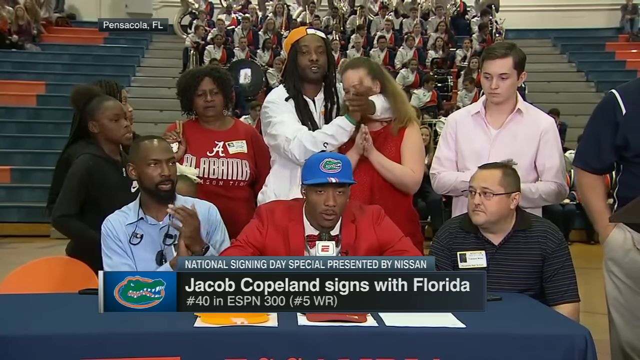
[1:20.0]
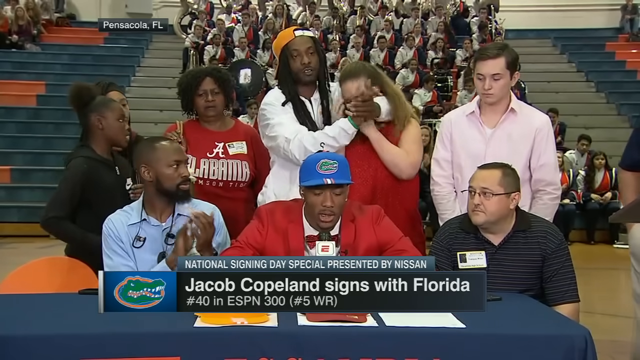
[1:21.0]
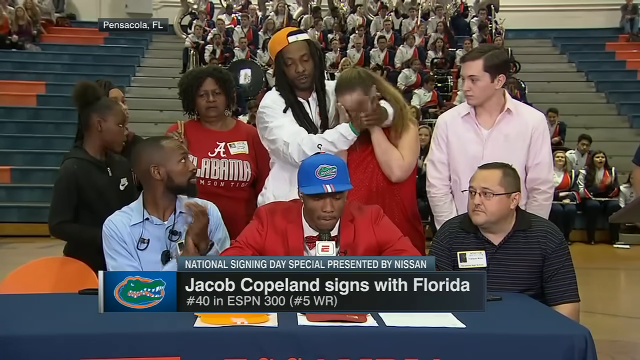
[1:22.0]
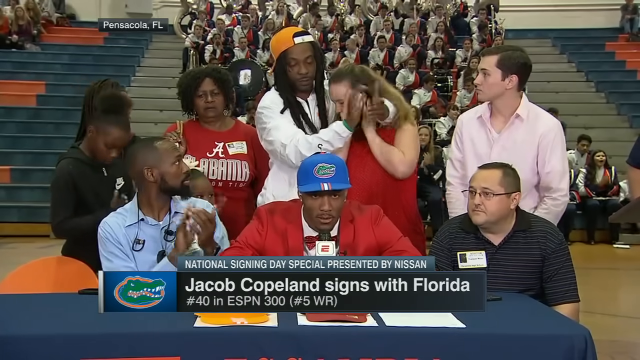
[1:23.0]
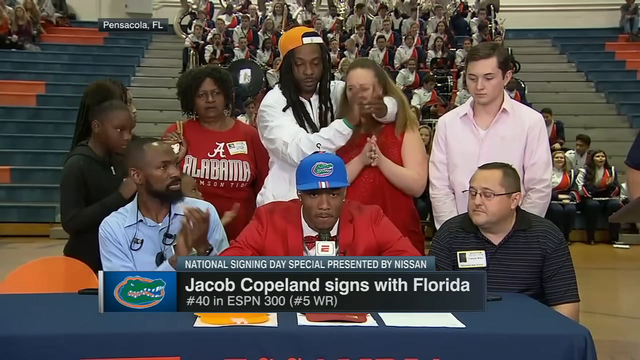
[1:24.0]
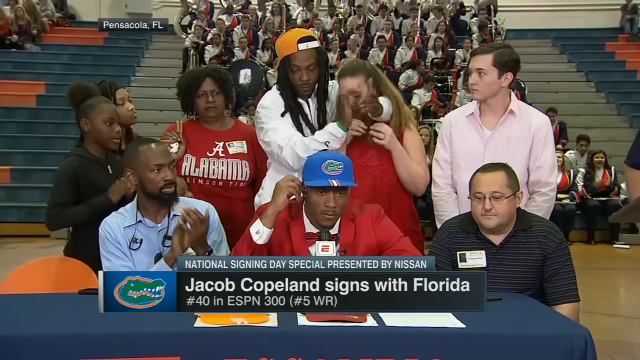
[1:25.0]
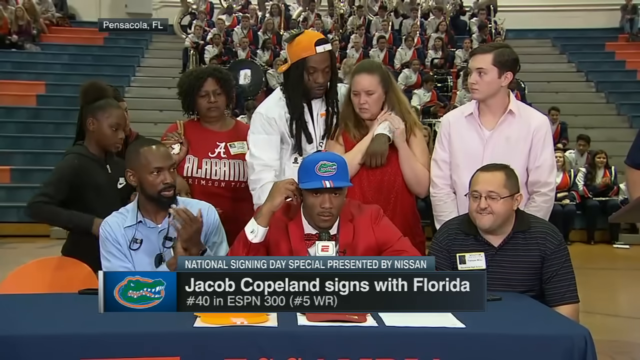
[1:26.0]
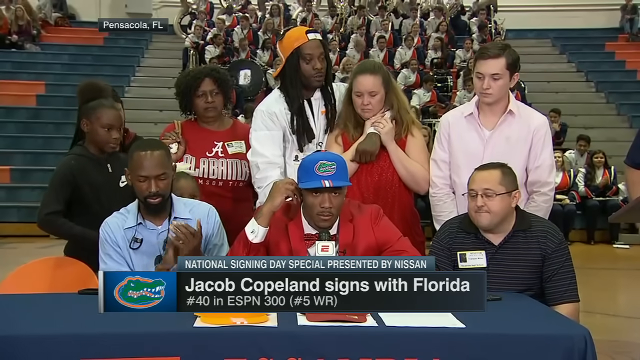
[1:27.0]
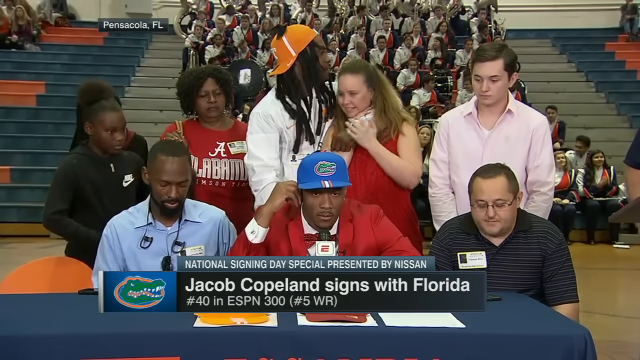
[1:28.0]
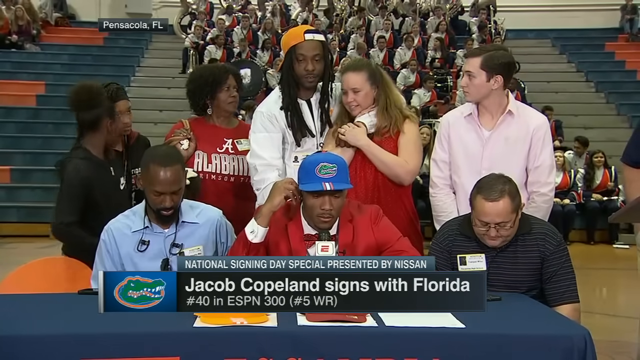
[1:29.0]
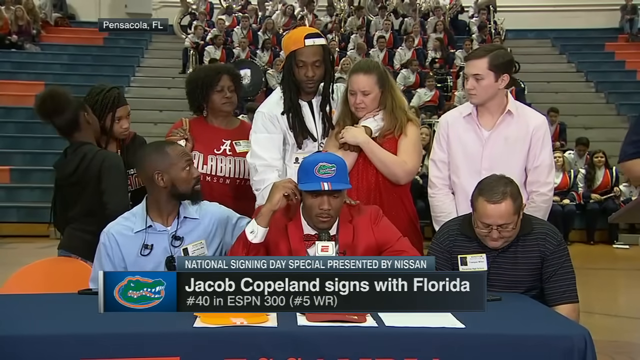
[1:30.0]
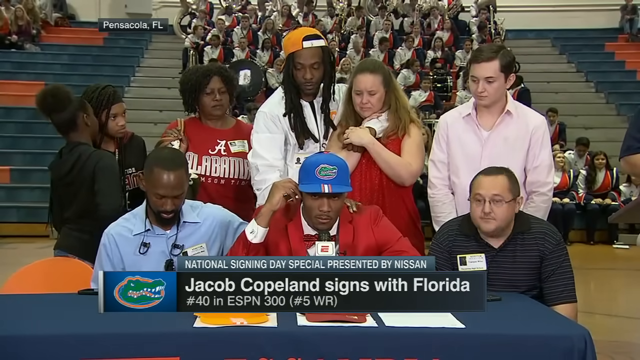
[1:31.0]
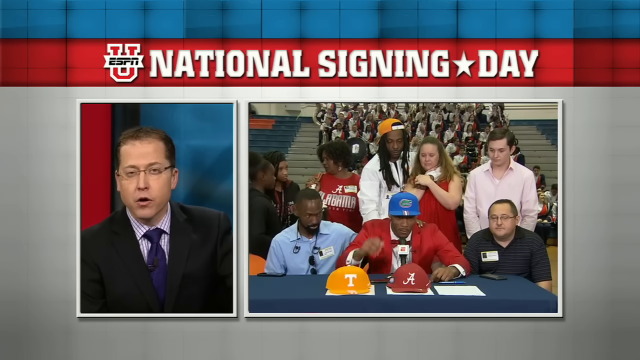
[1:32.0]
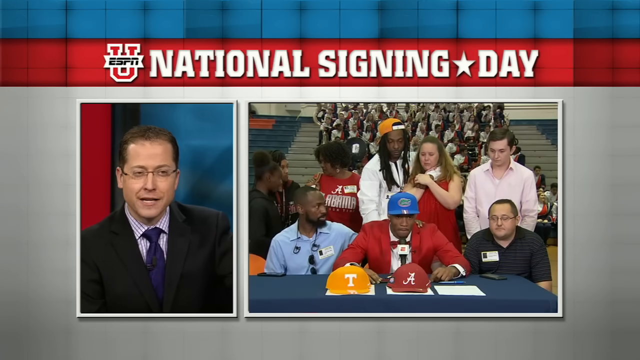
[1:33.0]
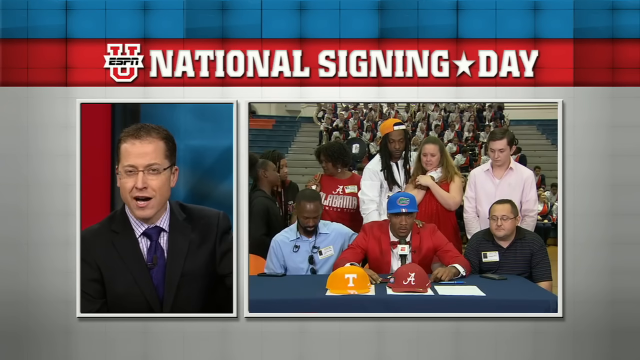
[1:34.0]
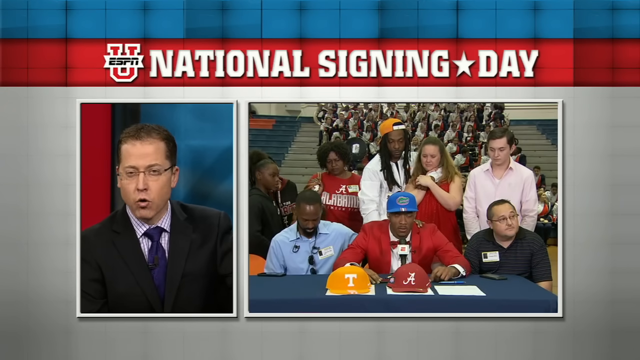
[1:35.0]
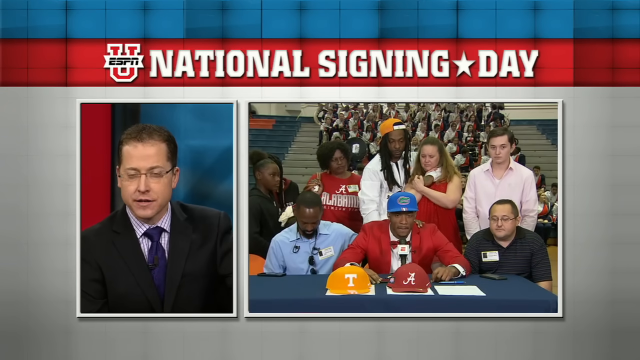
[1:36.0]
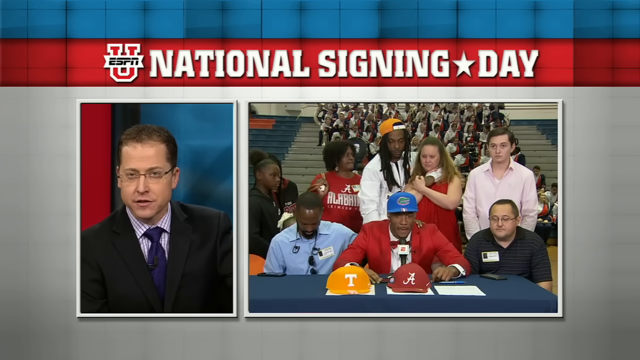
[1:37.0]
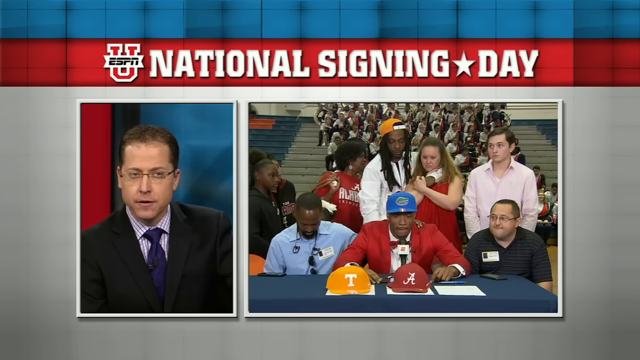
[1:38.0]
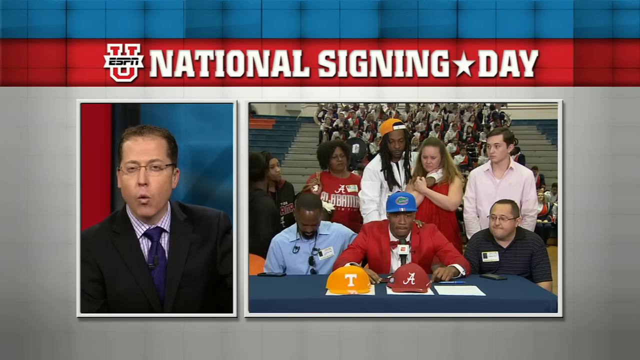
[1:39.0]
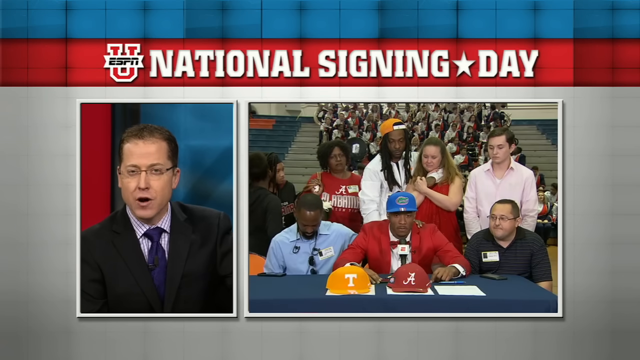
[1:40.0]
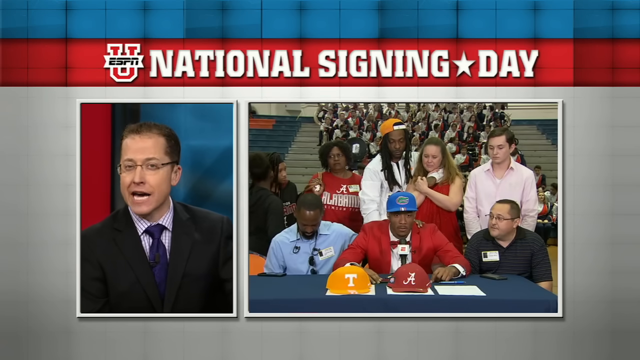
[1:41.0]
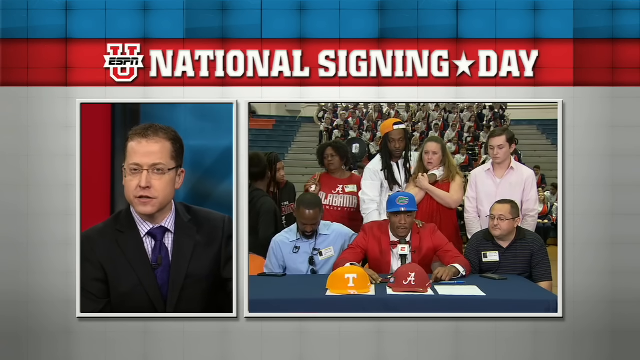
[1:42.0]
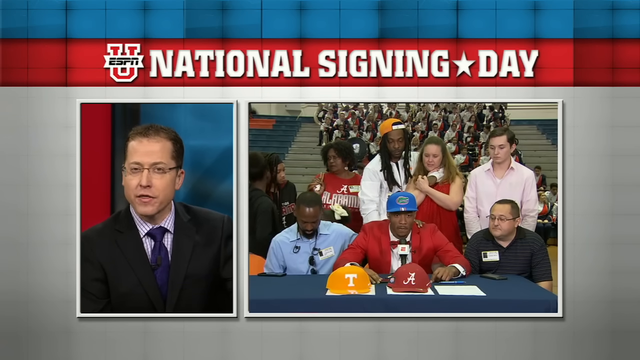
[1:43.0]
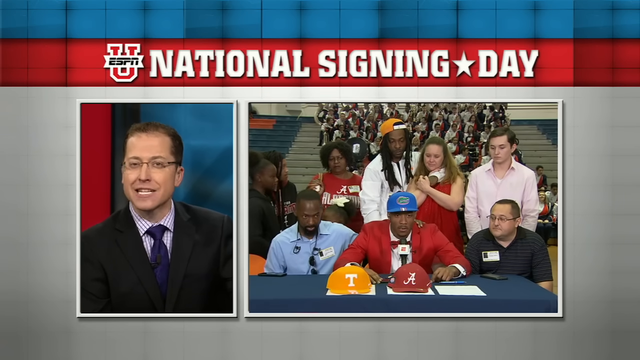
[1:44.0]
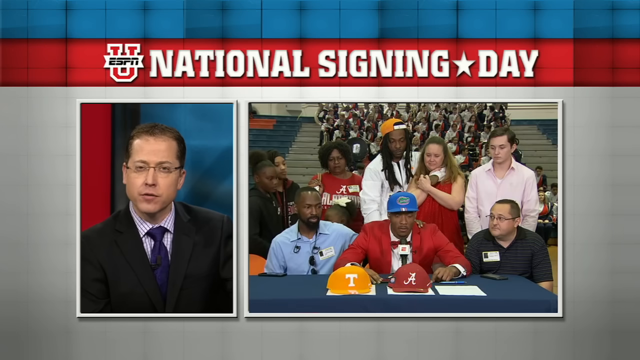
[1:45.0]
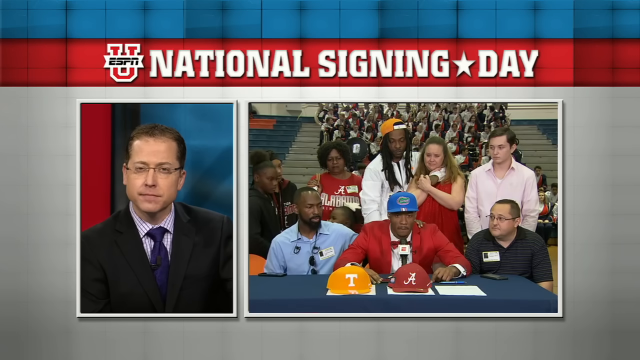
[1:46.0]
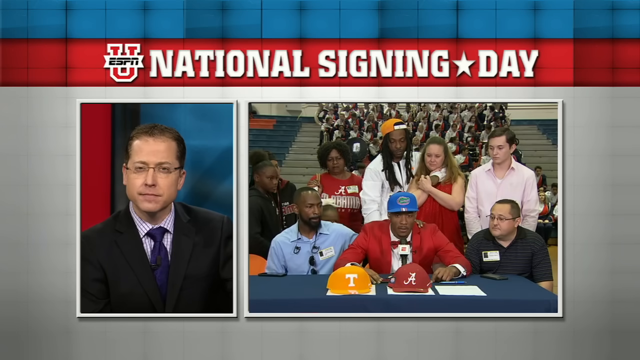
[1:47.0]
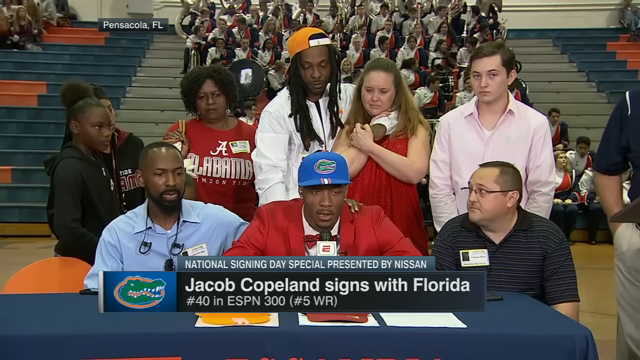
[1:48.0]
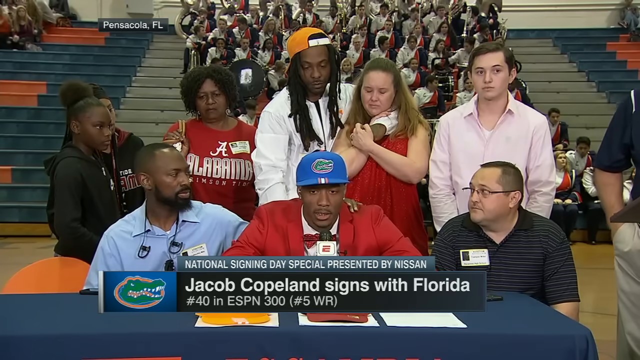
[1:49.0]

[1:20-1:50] Jacob Copeland, the No. 5 wide receiver in the country and the No. 40 overall recruit according to ESPN, continues to talk. He is surrounded by family and friends, many of whom are clapping, smiling and cheering, and a woman moved to happy tears is just over Copeland's left shoulder (the viewer's right). As Copeland keeps talking into the microphone, the people around him begin to clap more feverishly in excitement. At one point, the crying woman is comforted by a young man. Most of the way through, the video cuts away: Copeland stays on screen but is now inside a box, and on the viewer's left is a news or sports anchor, a Caucasian man in a black button-down suit, purple tie and glasses, talking to Copeland. A red banner at the top of the screen indicates this is National Signing Day, and the ESPNU logo appears at the top left of that banner, showing it is broadcast on ESPNU. The sportscaster asks Copeland questions, and Copeland listens intently.